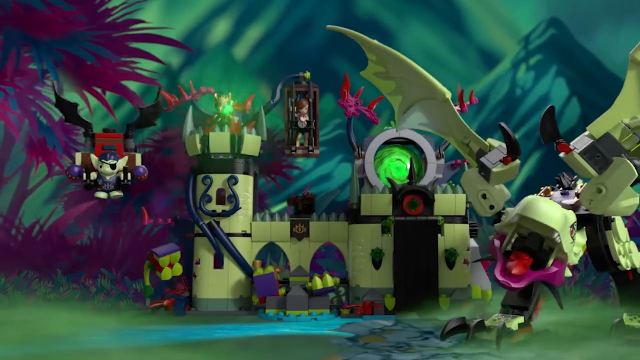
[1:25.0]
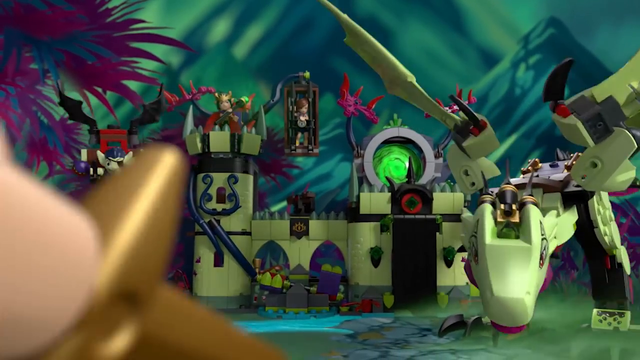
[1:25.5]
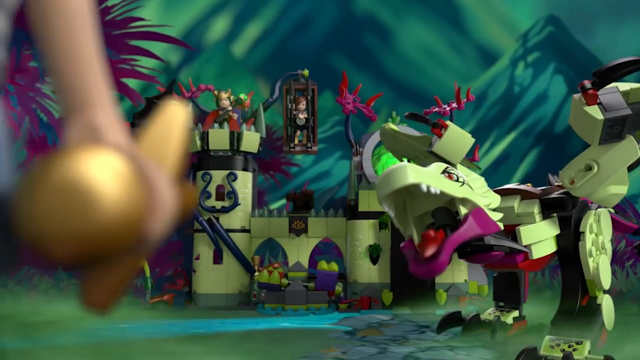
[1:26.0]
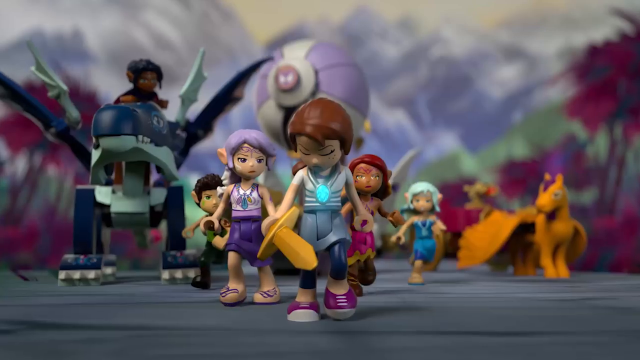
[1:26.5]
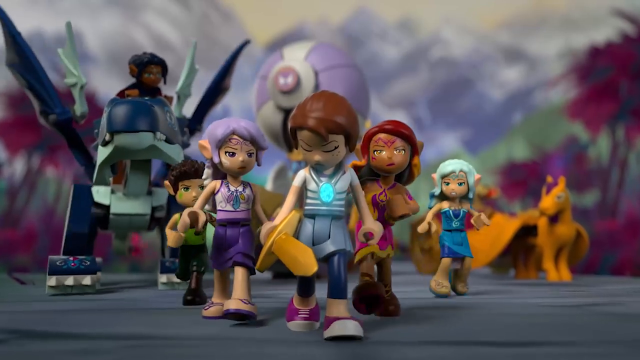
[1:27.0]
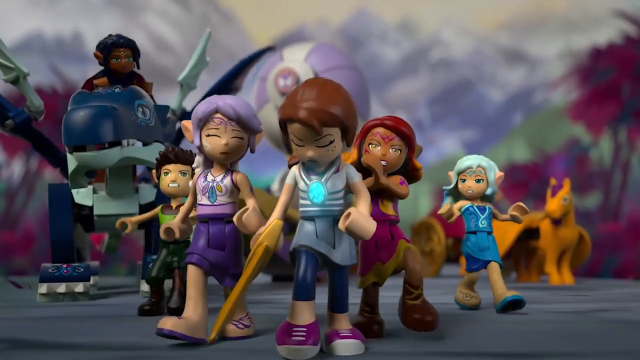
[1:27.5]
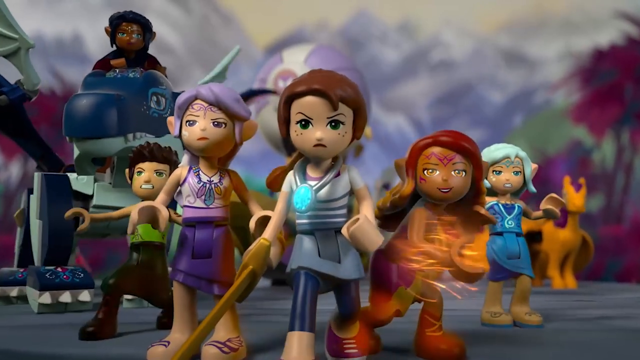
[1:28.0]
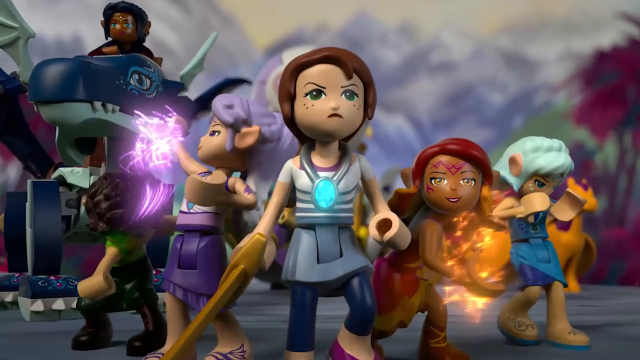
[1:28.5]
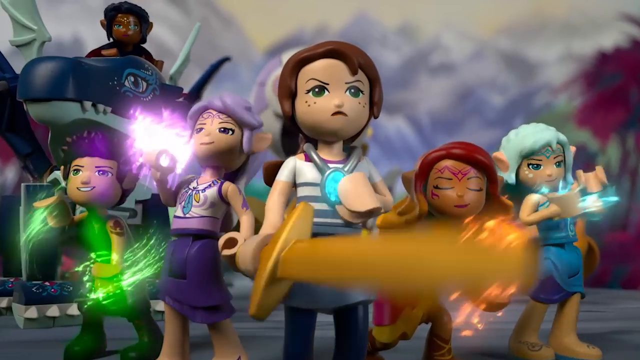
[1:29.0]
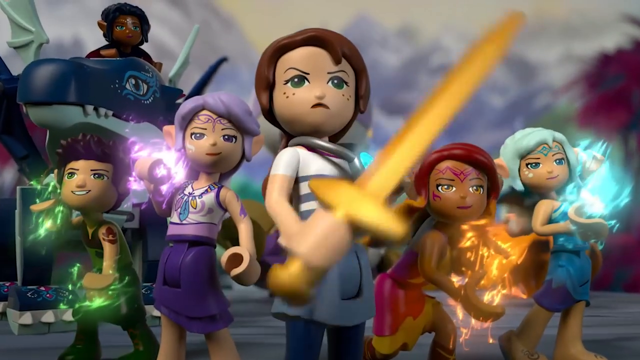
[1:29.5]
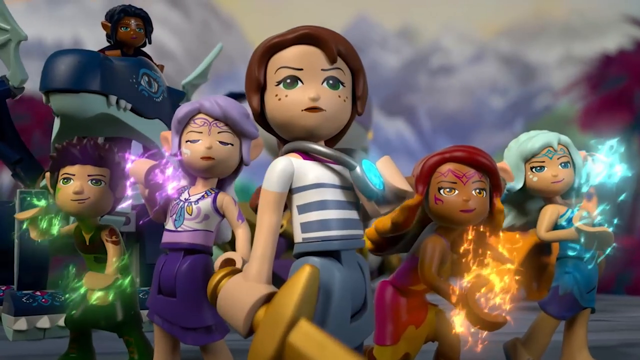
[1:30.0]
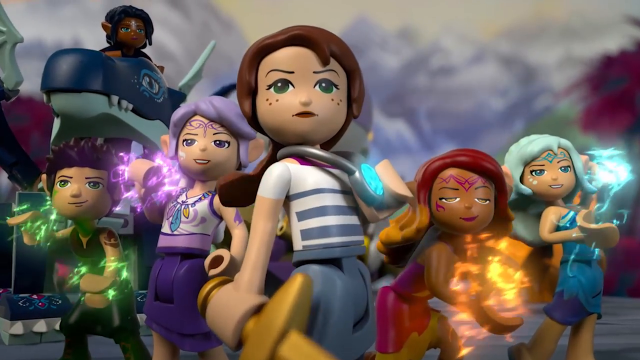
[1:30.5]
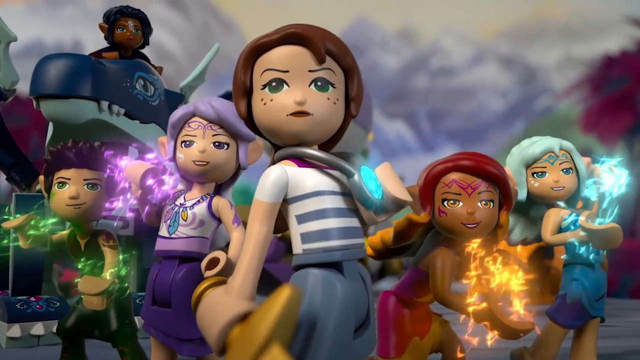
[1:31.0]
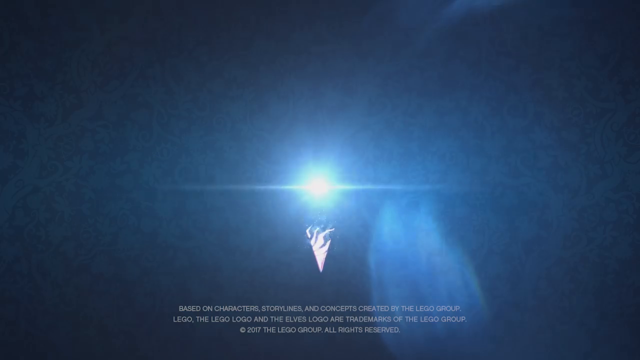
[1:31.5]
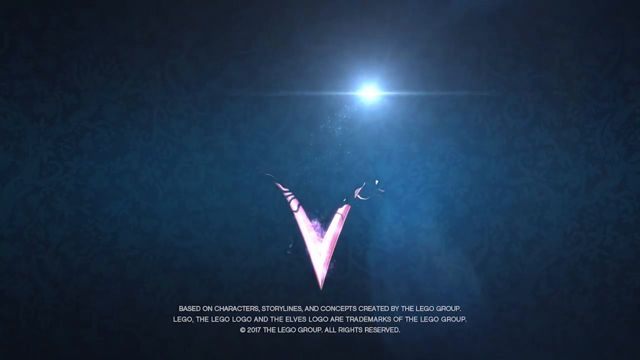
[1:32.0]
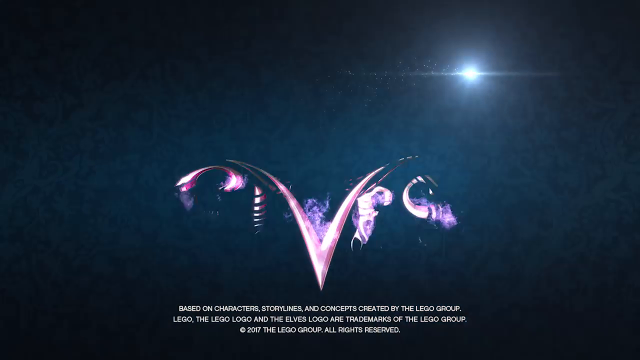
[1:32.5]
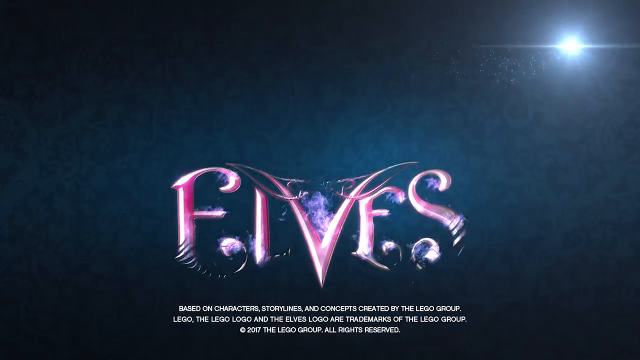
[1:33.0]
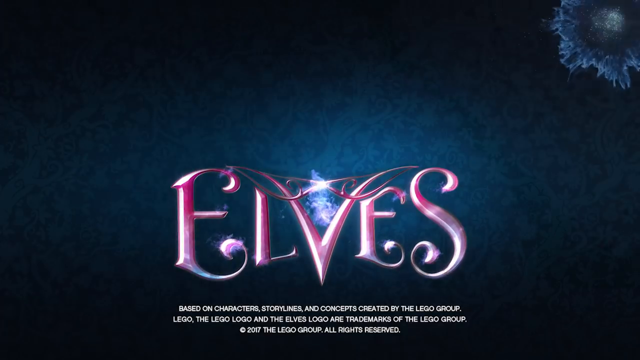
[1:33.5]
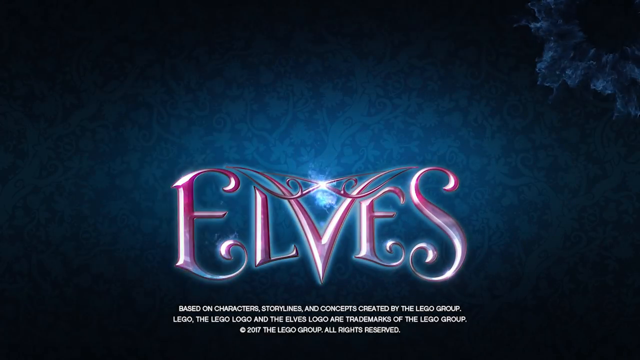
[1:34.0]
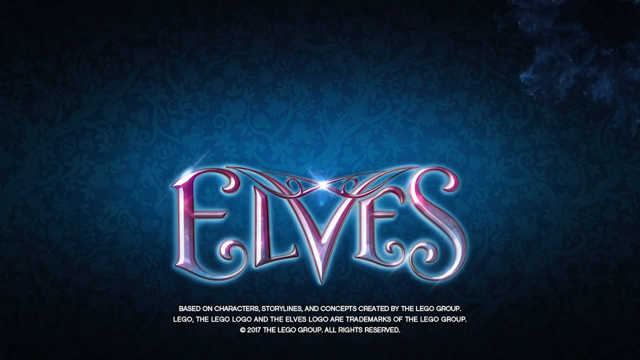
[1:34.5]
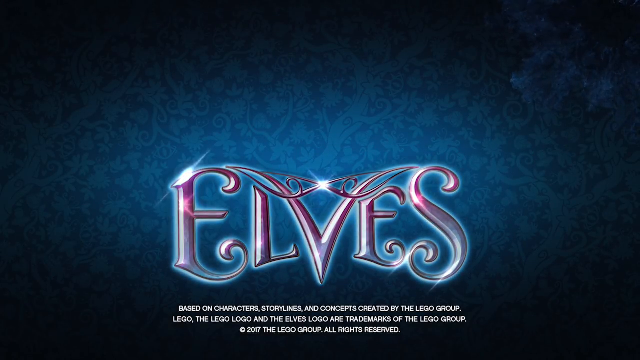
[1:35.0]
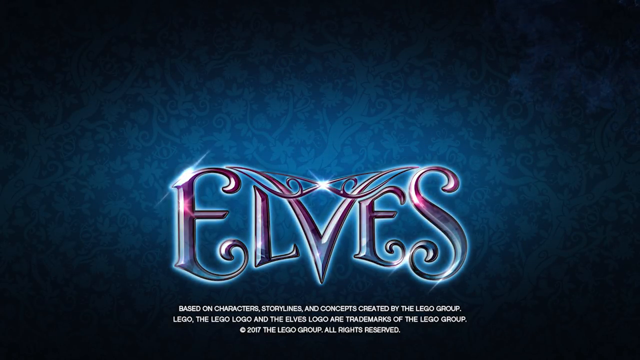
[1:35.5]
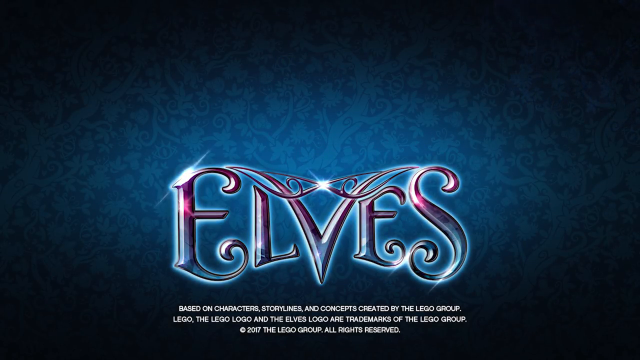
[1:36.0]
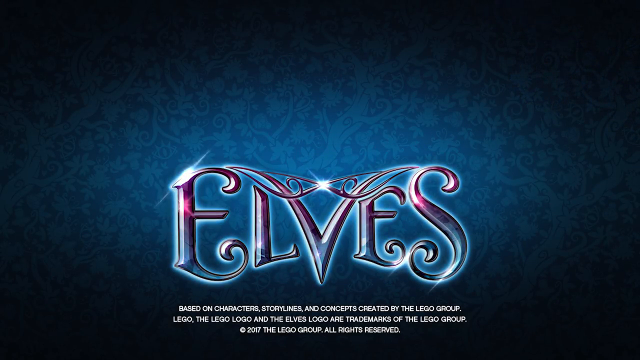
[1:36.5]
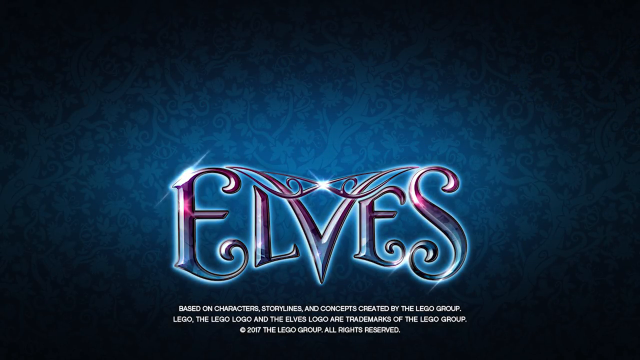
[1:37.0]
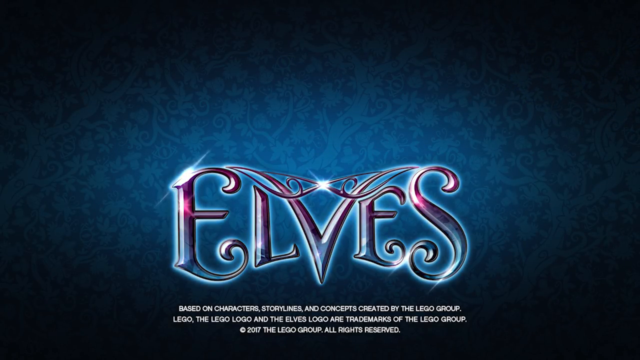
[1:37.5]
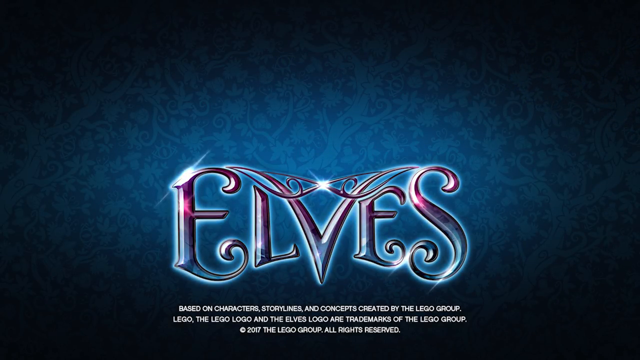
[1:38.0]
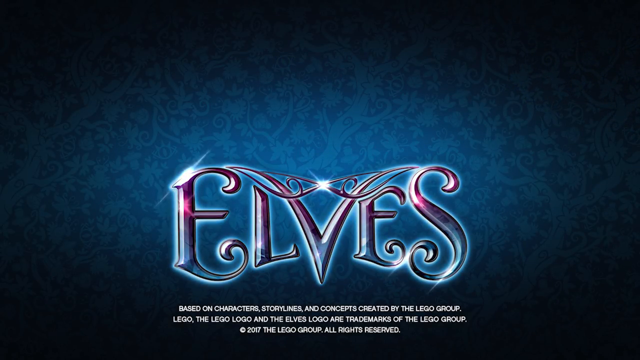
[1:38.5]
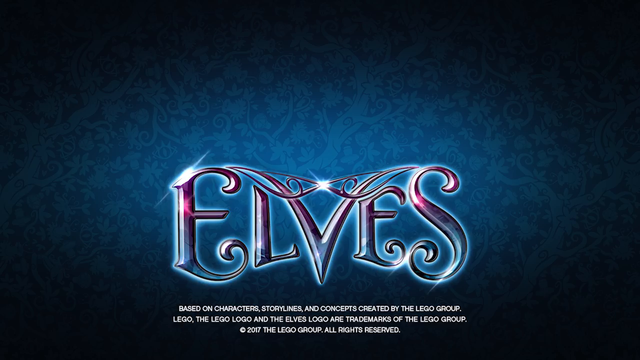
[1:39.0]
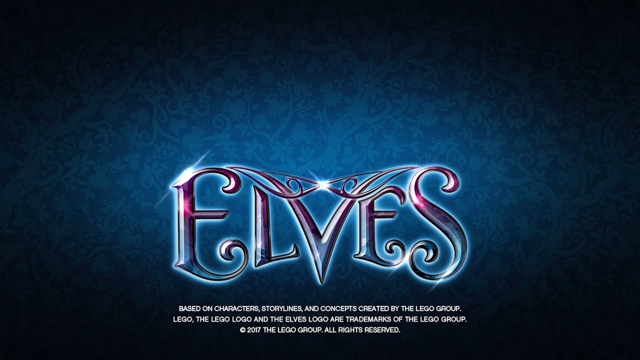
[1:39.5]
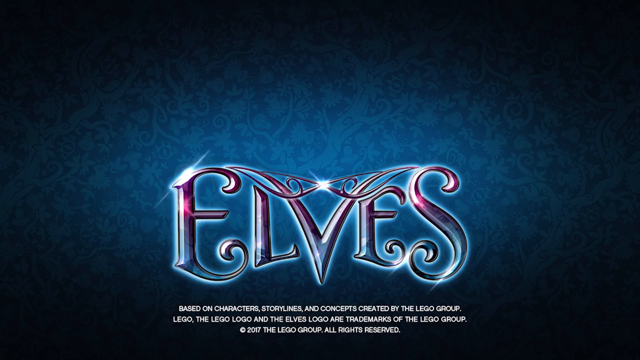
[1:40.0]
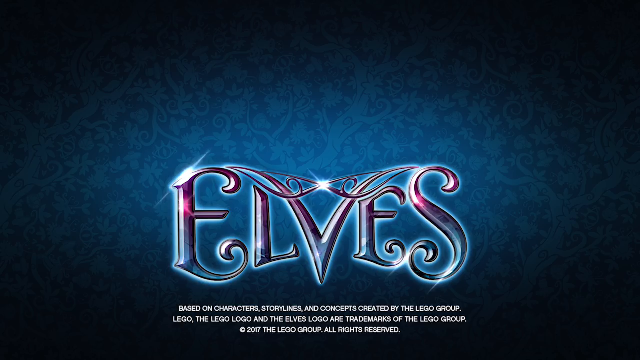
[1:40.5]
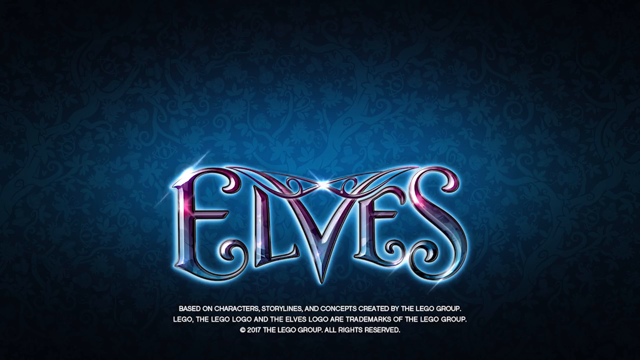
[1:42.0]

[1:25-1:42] The dragon, the goblins, and the witch are all standing in front of the castle celebrating, with the cage hanging slightly above the little castle. The camera then shows the other side, apparently the heroes, who hold weapons. The girl in front with brown hair has a sword. To her right is a dark-skinned, tan-skinned woman with red hair who has fire, and to the right of her is the elf girl with blue hair, who has blue magic. To the left of the girl in the center is a girl with purple hair who also looks to be an elf and has purple magic, and to the left of her is the boy with short brown hair, who has green magic. Behind them, to the left, is a big blue dragon. They are posing, setting up for what looks to be a final battle.